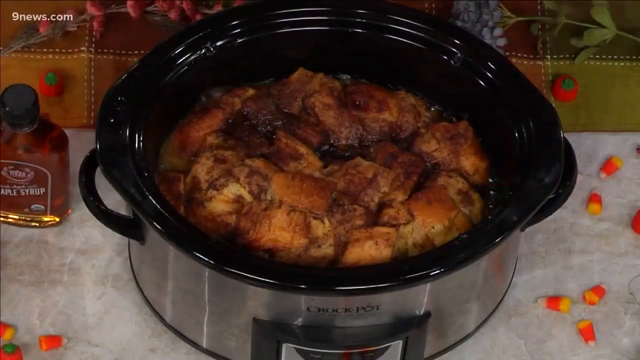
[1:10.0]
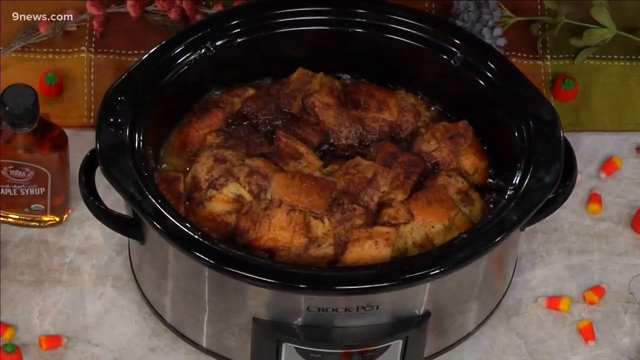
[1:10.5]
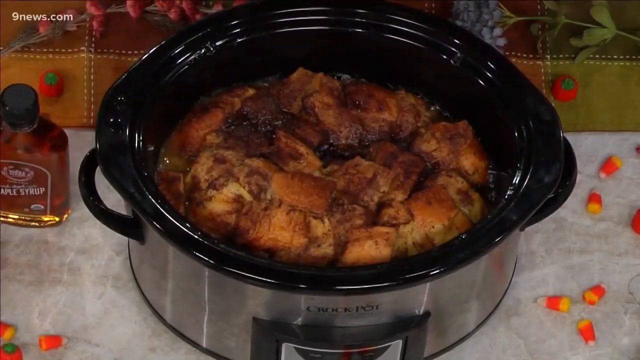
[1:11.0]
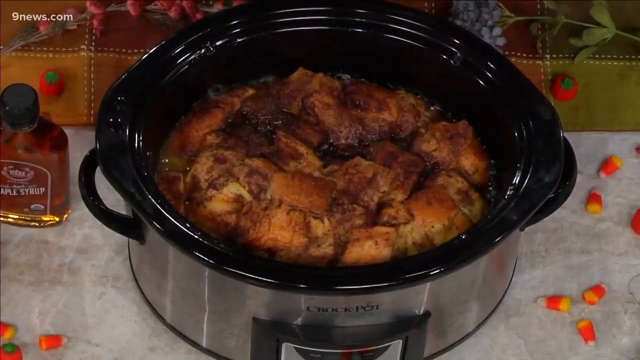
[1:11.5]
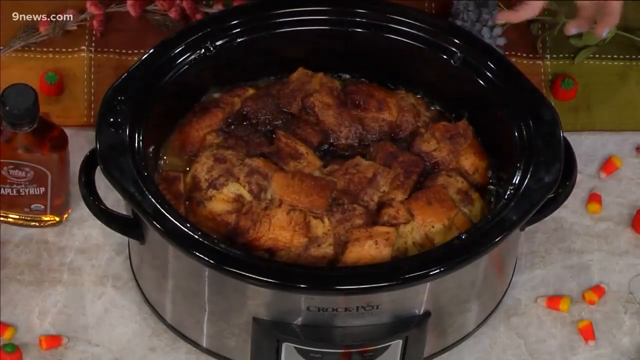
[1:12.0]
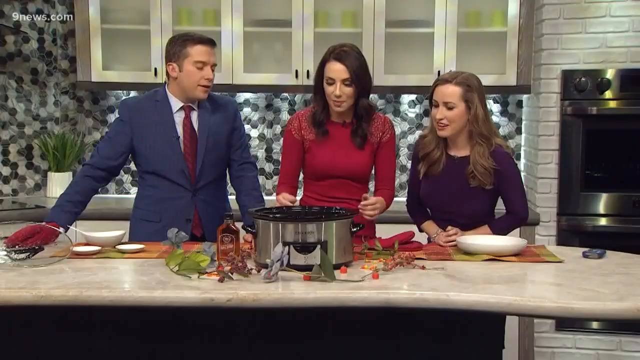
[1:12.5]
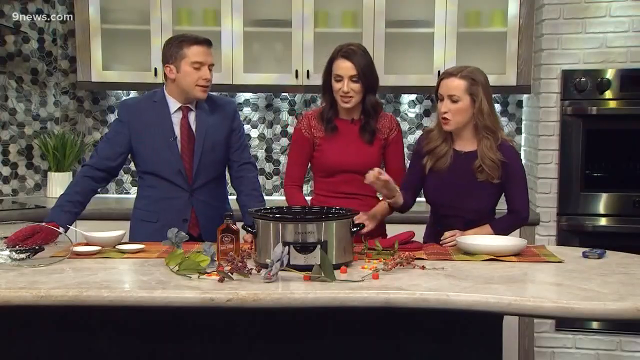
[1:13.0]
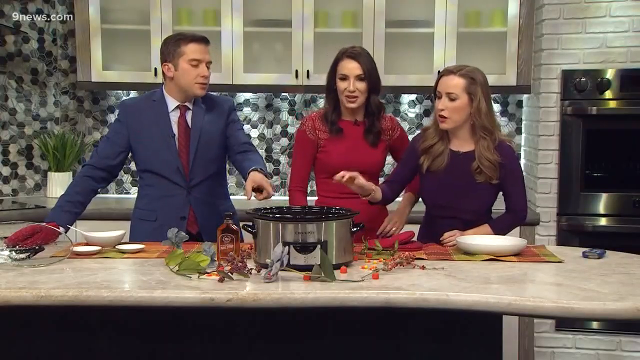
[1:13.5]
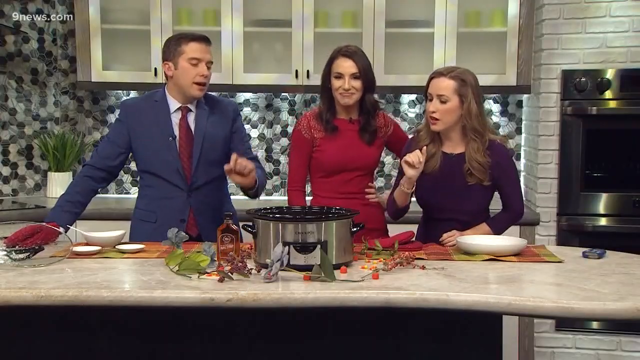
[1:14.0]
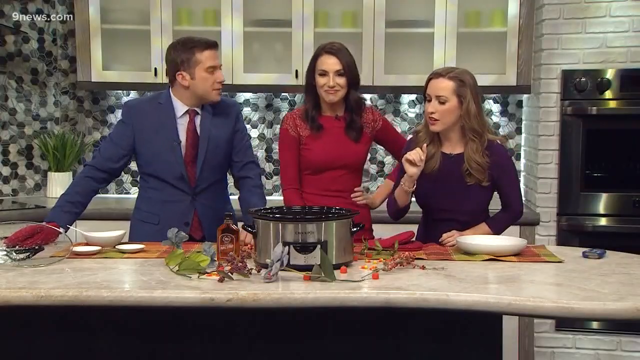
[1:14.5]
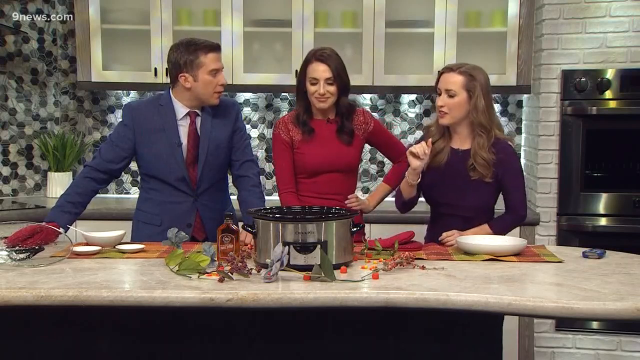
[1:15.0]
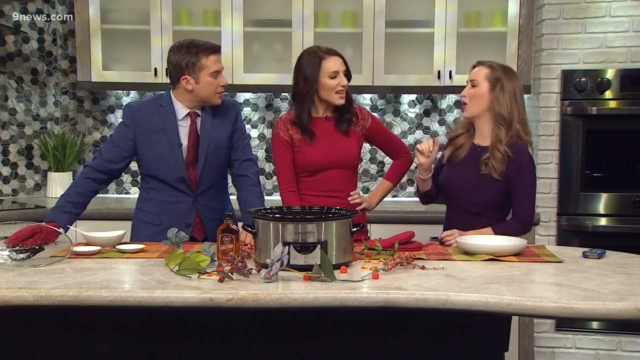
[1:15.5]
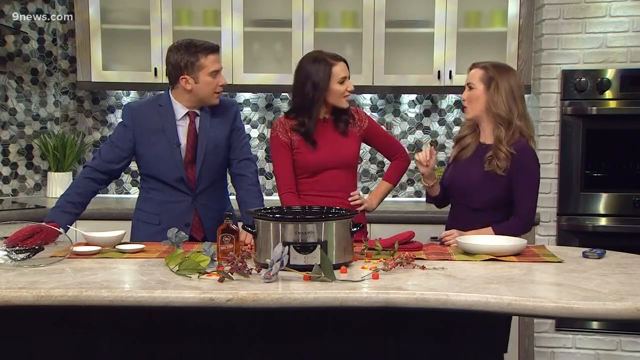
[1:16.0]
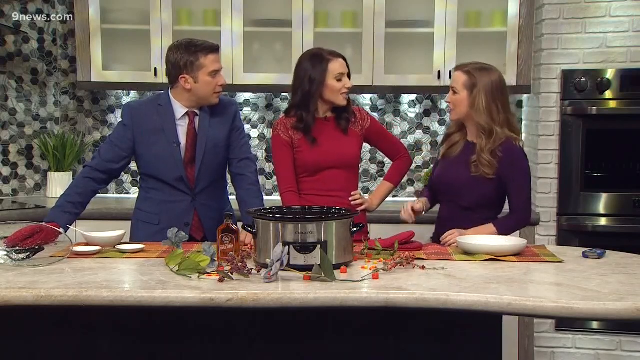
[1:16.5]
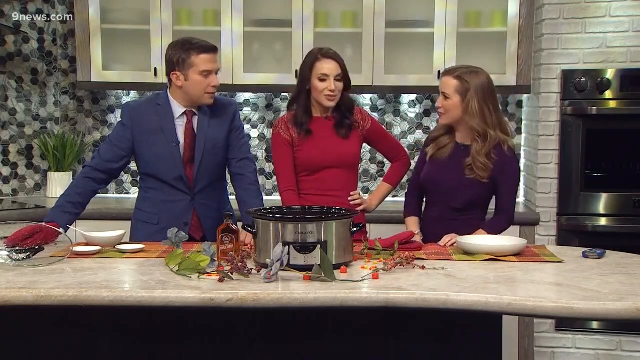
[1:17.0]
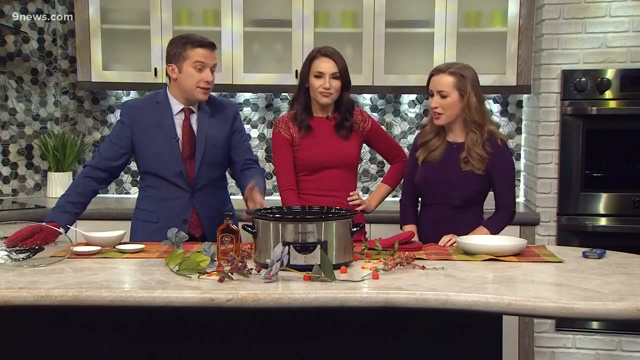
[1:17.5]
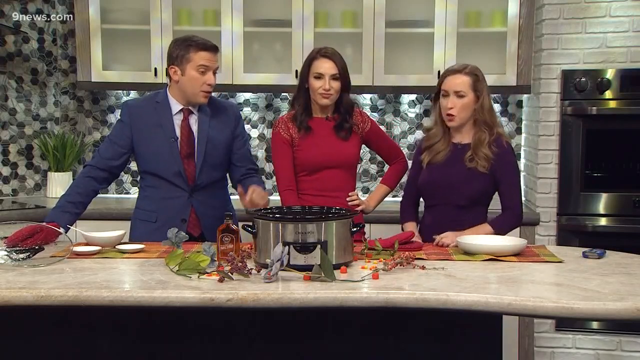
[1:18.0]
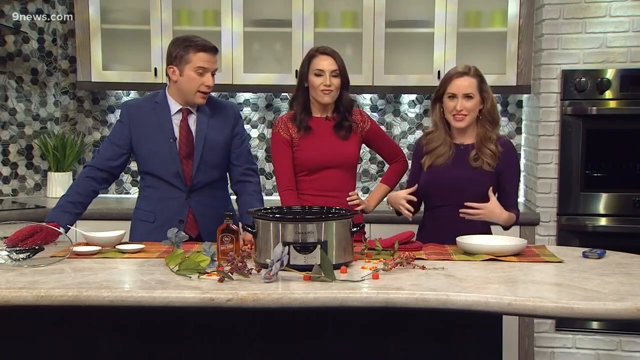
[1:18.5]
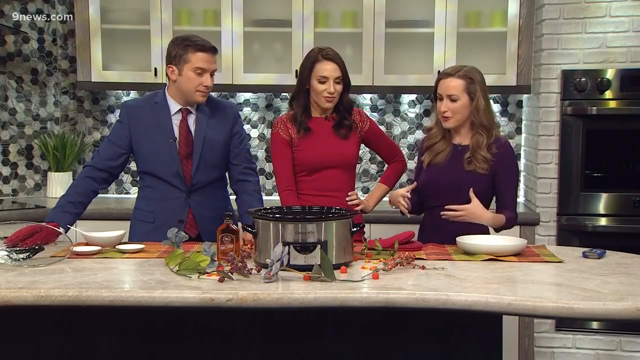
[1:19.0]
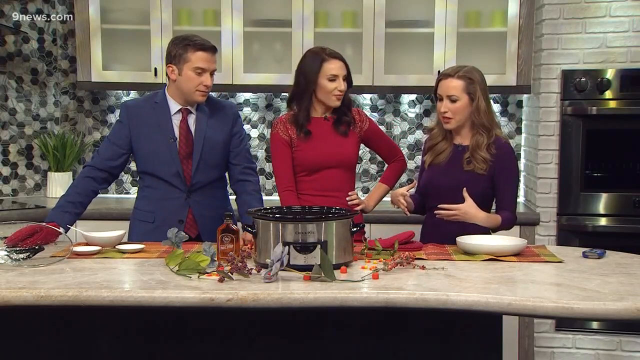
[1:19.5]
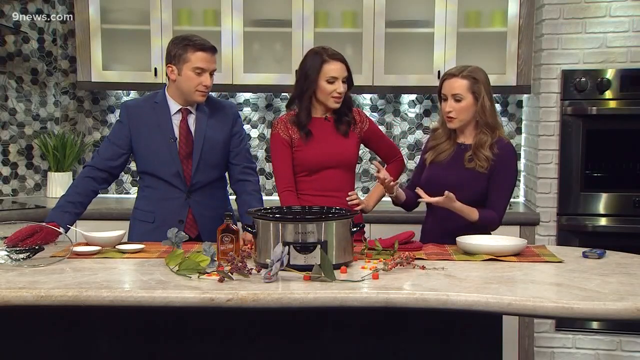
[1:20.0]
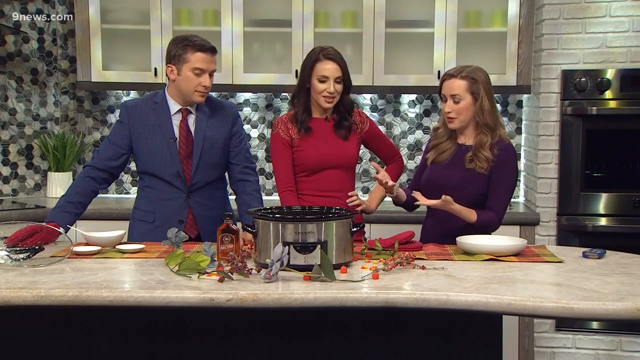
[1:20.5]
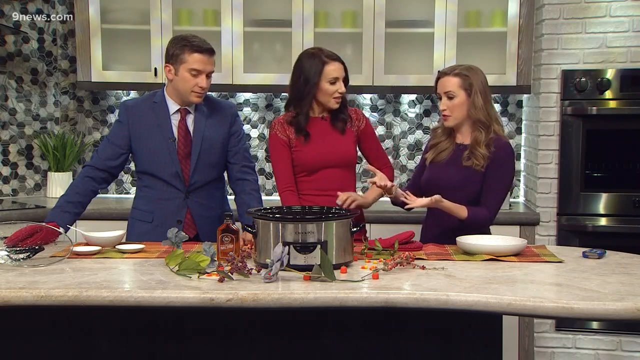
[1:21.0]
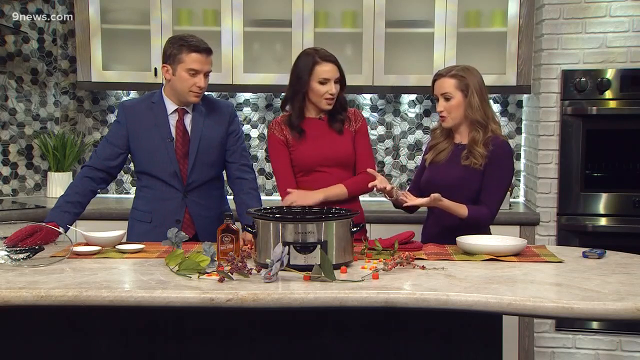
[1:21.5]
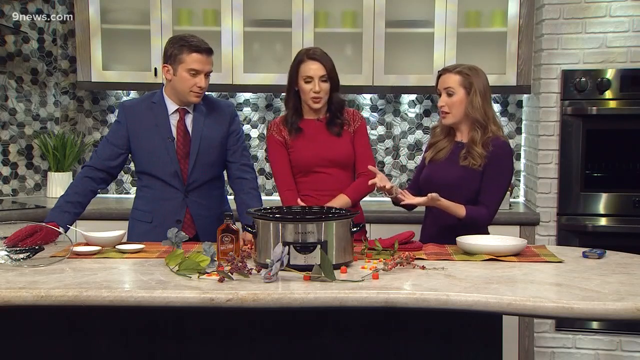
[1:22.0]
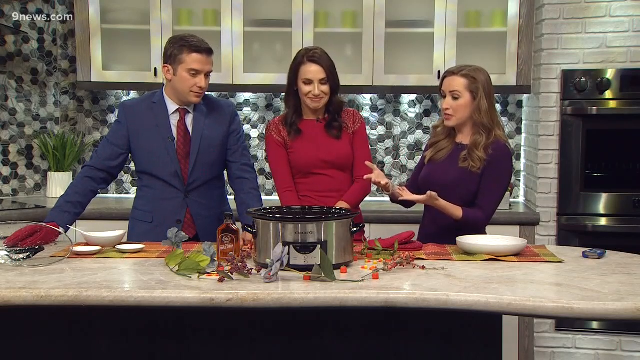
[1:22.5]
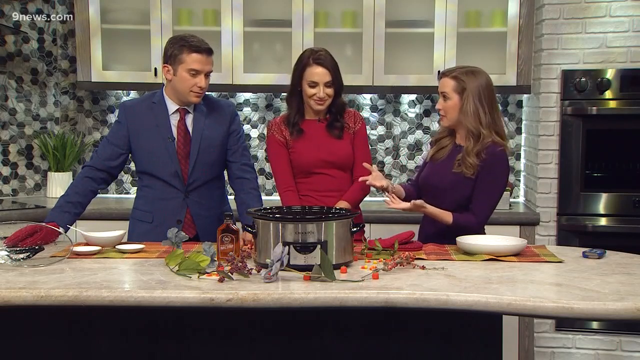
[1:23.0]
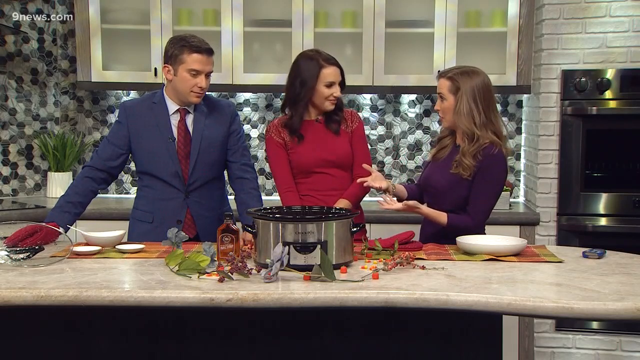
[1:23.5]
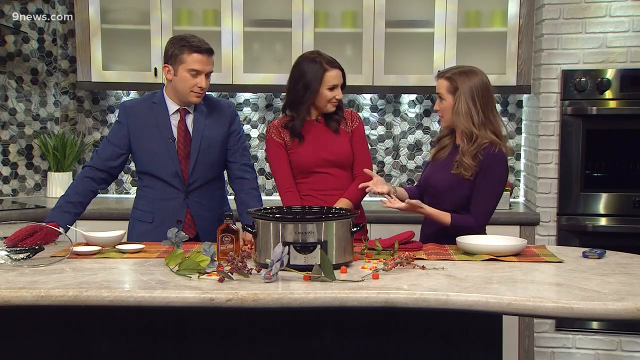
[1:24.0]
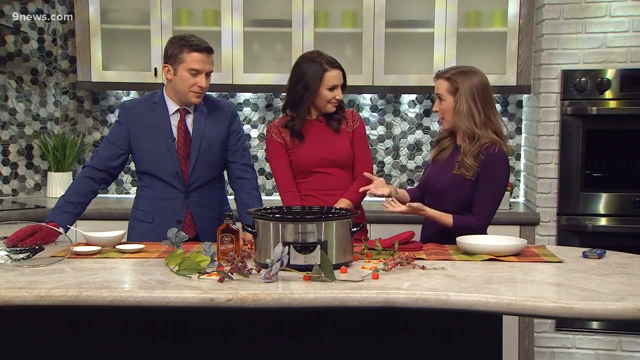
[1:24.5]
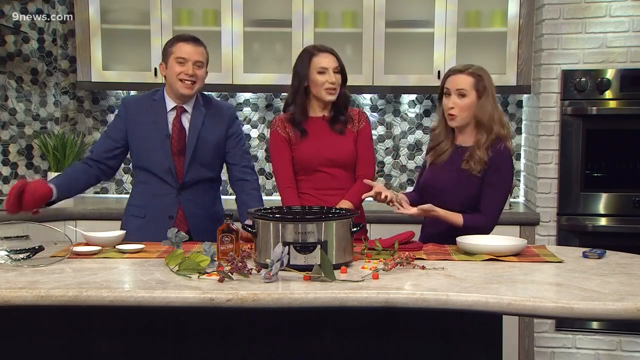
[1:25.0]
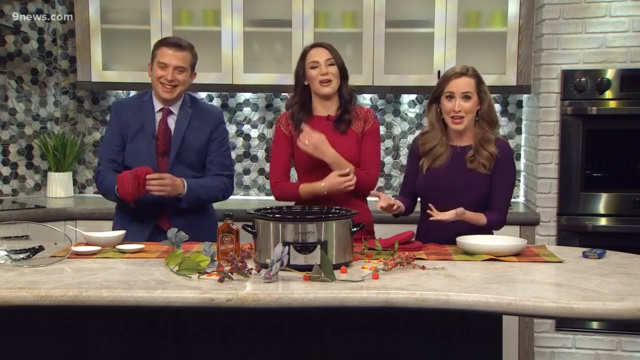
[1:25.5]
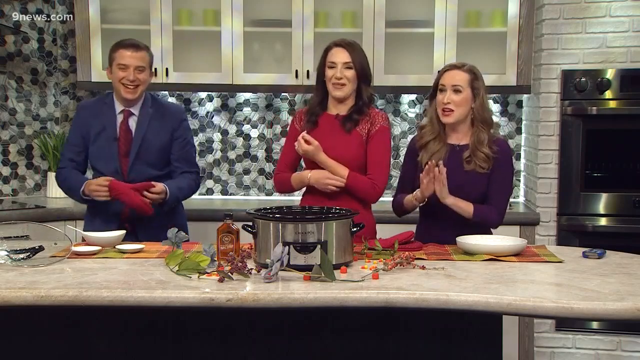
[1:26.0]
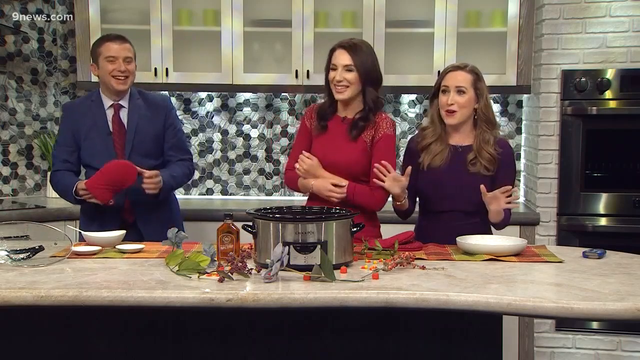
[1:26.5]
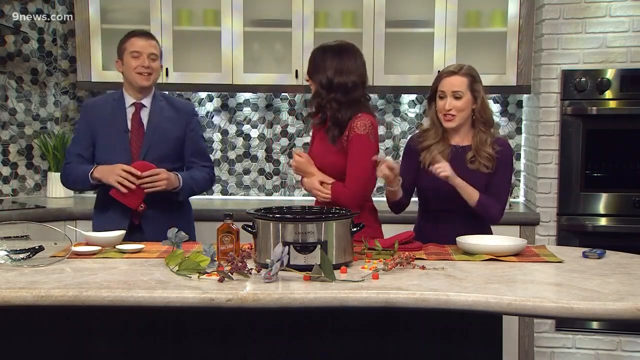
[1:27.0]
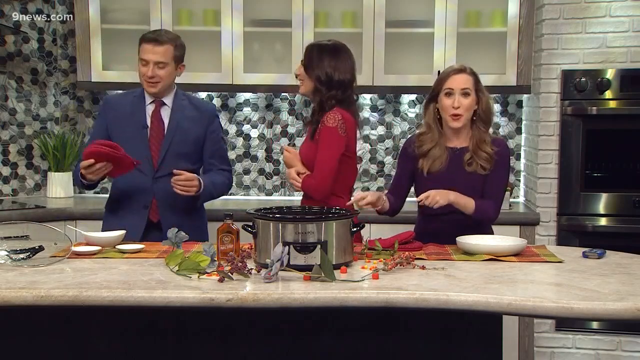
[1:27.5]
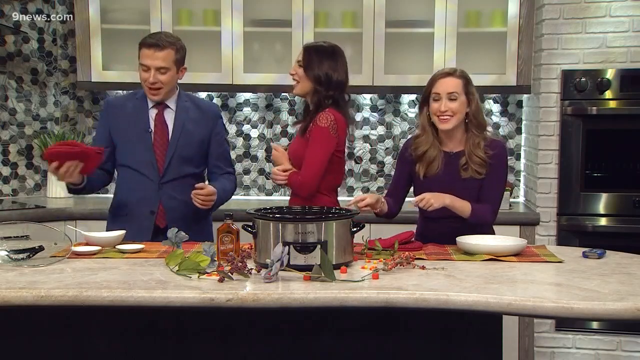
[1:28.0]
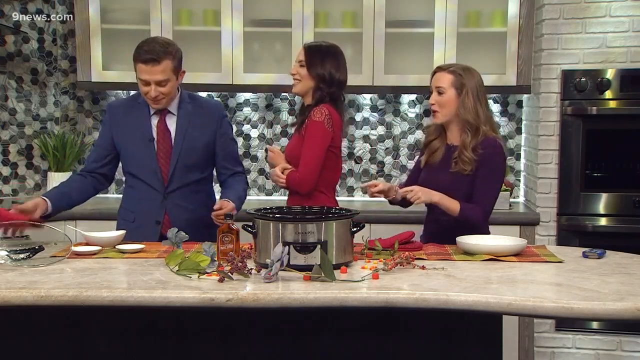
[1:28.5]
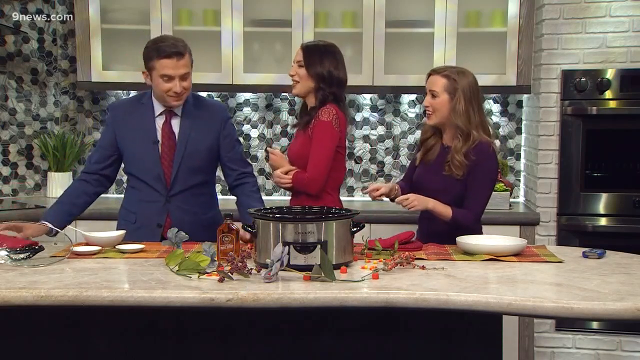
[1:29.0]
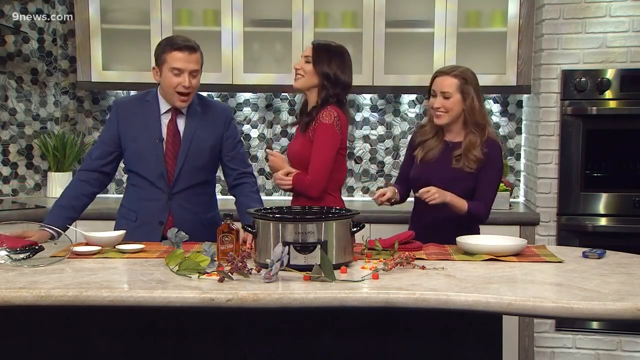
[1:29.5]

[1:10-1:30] The video switches back to the people standing behind the counter in the kitchen. A closer look inside the pot shows what is probably chicken, white meat that has been fried or turned brown, simmering, which suggests the pot is electric. The three of them talk, laugh and face each other. The man stands on the far left wearing a red tie and a purple suit, the lady in the middle wears a maroon dress, and the one on the far right wears a purple dress and has long blonde hair. They look very smart as they talk and laugh. The table is unchanged, with flowers around the pot, and it is kind of busy around the middle near the pot.